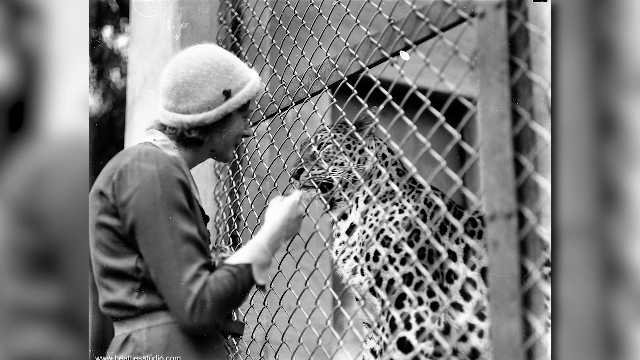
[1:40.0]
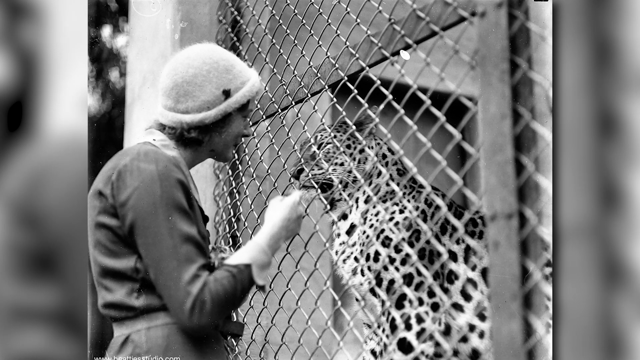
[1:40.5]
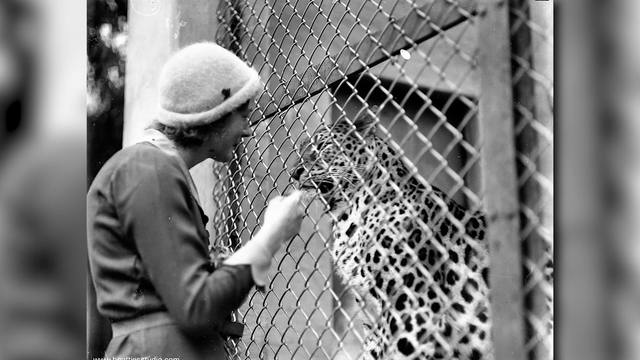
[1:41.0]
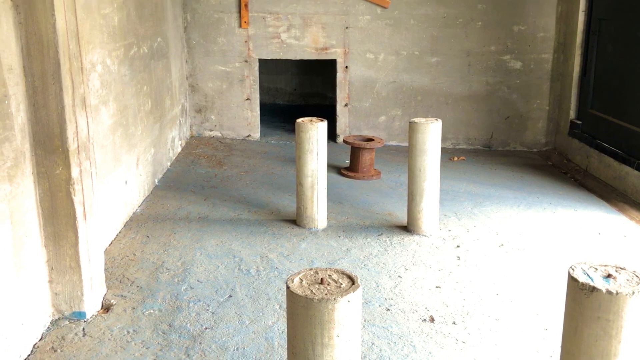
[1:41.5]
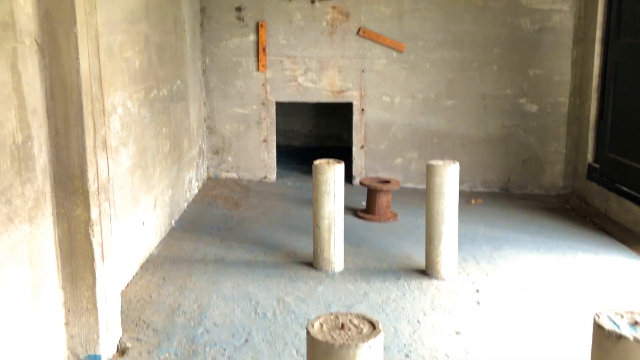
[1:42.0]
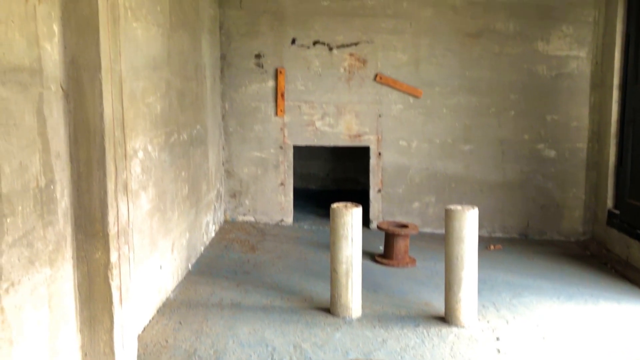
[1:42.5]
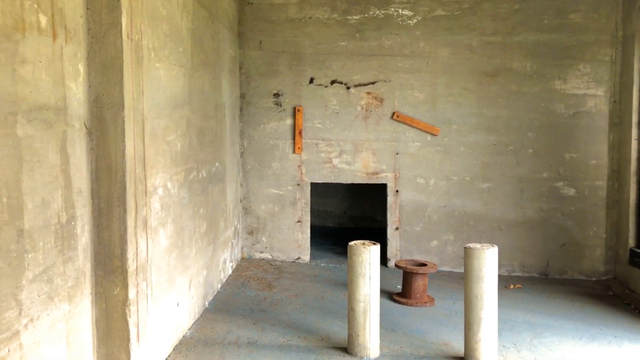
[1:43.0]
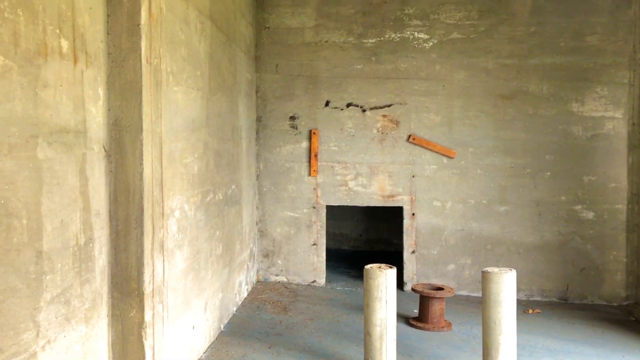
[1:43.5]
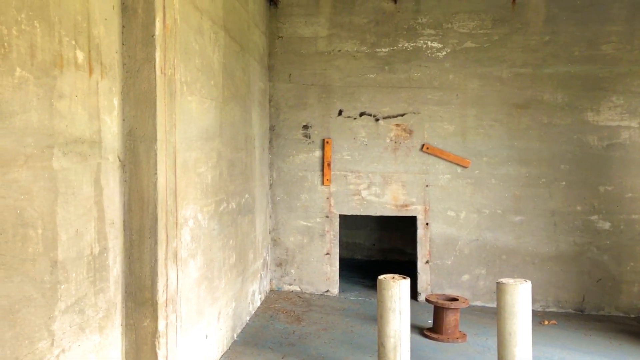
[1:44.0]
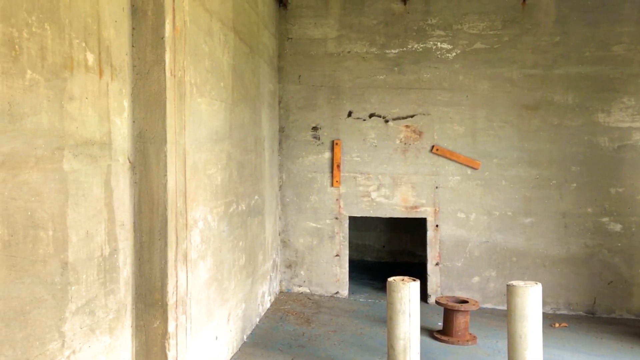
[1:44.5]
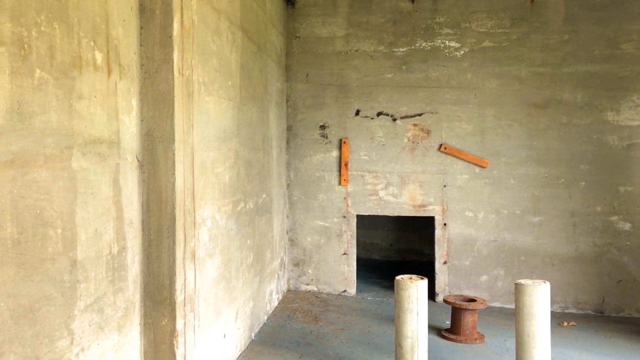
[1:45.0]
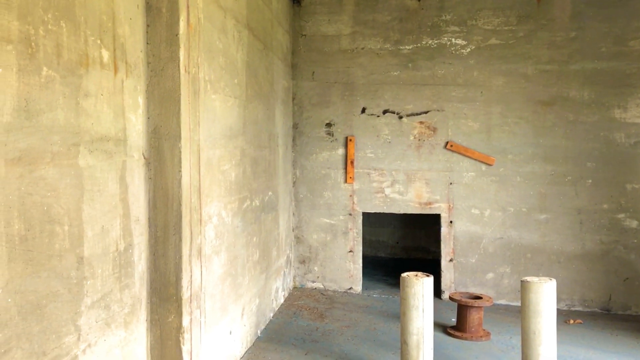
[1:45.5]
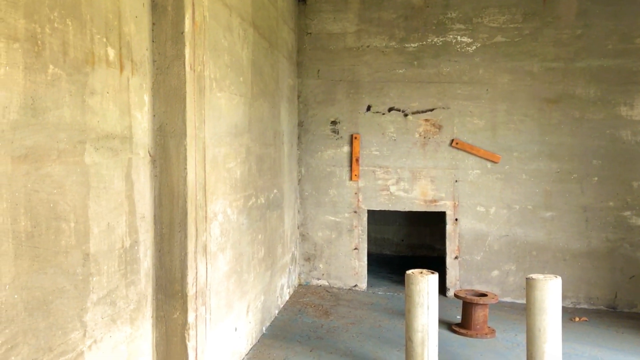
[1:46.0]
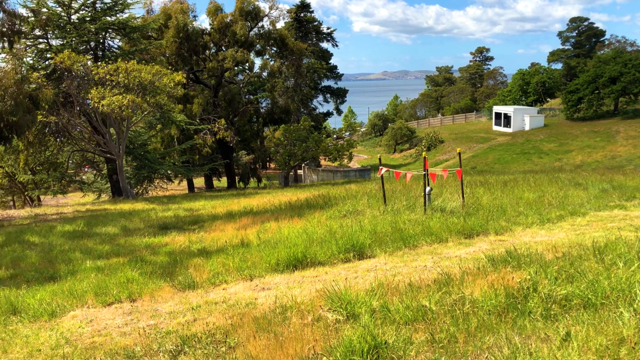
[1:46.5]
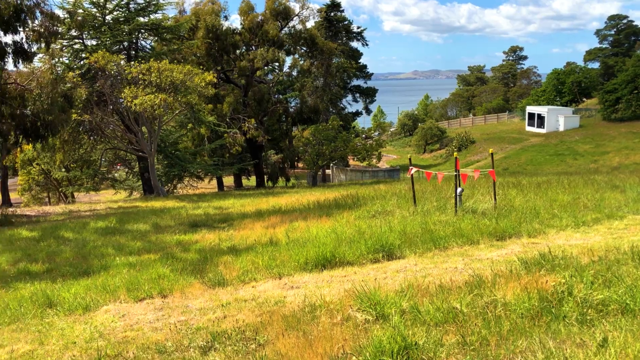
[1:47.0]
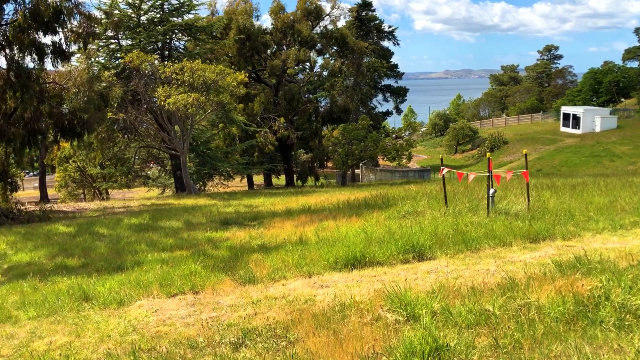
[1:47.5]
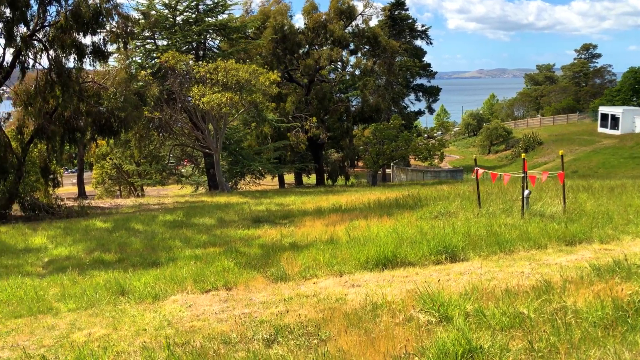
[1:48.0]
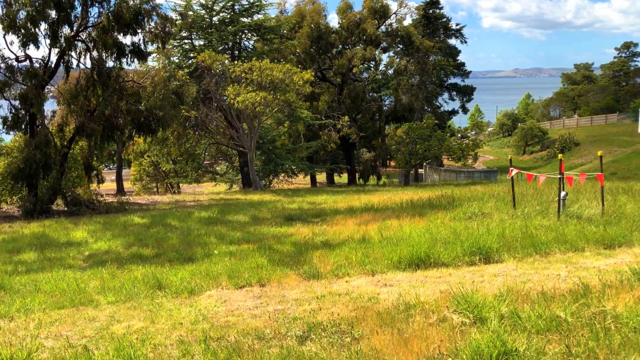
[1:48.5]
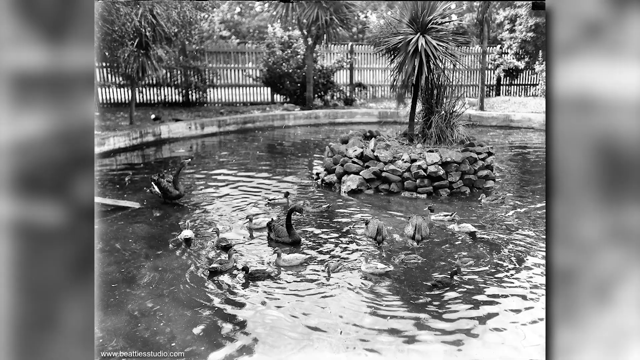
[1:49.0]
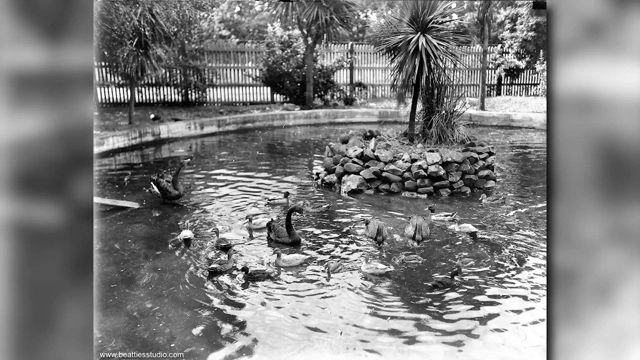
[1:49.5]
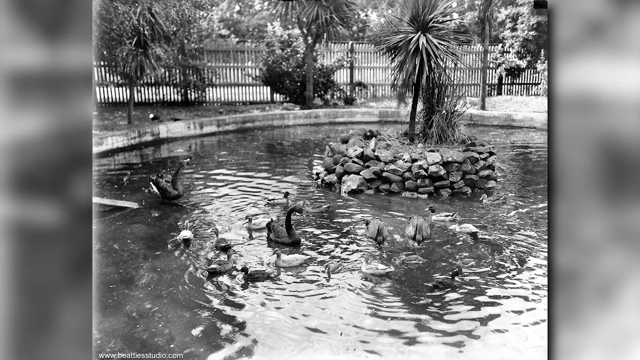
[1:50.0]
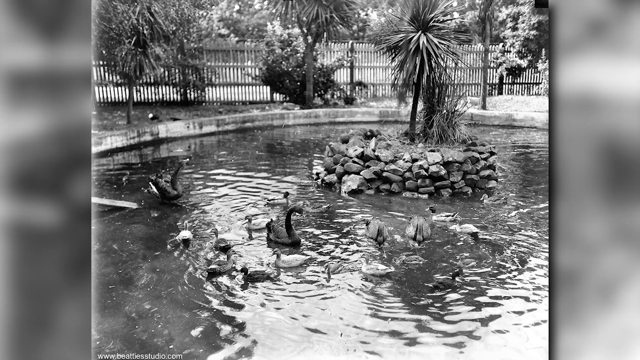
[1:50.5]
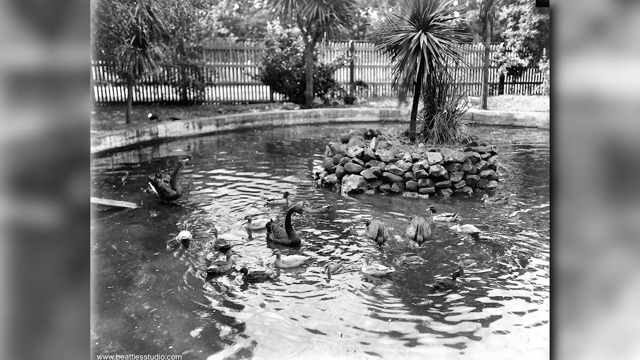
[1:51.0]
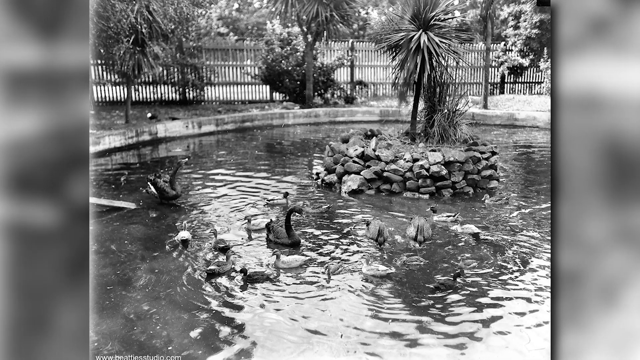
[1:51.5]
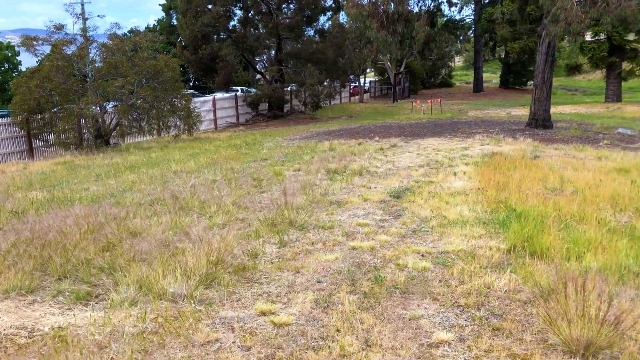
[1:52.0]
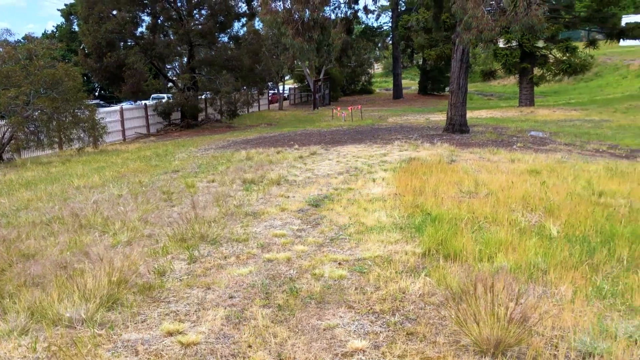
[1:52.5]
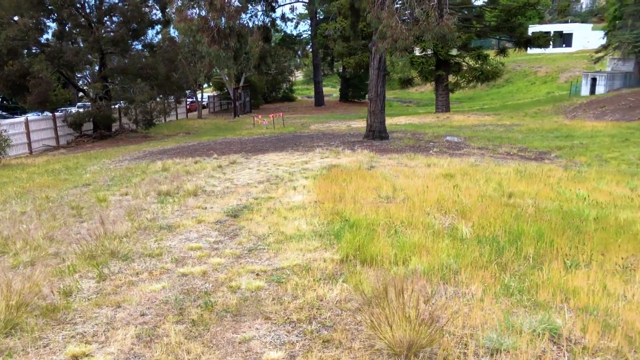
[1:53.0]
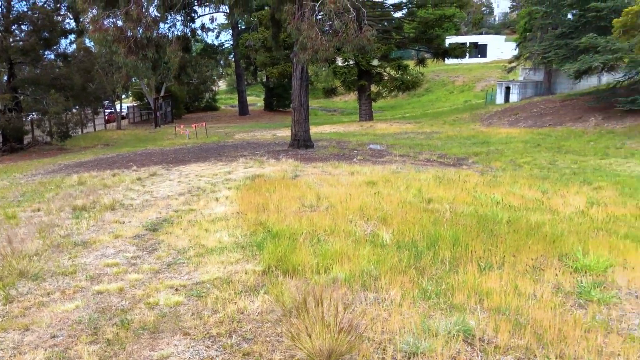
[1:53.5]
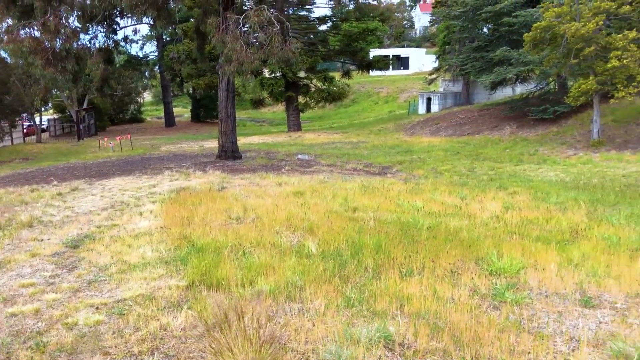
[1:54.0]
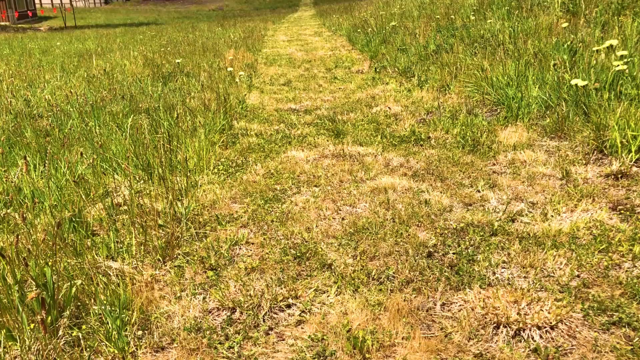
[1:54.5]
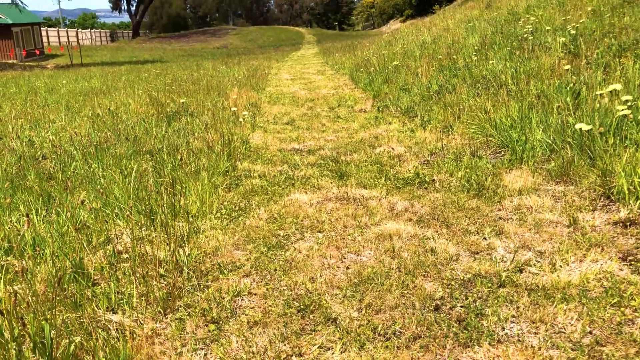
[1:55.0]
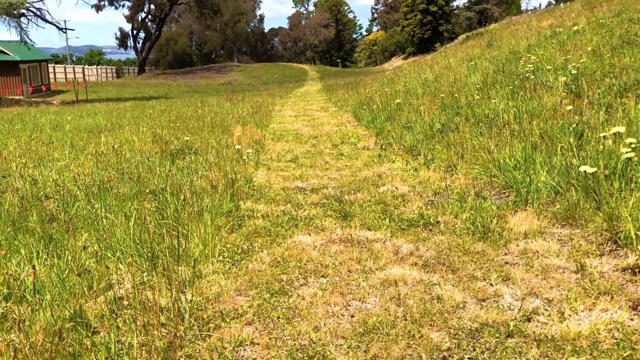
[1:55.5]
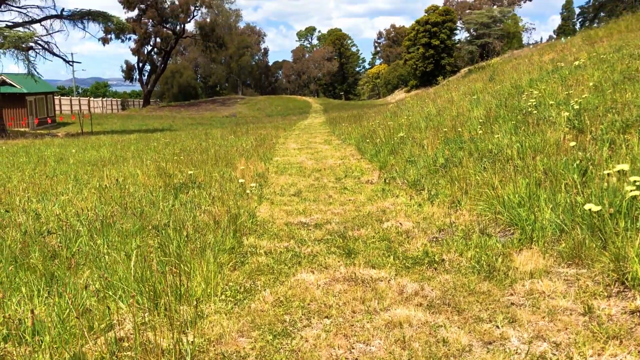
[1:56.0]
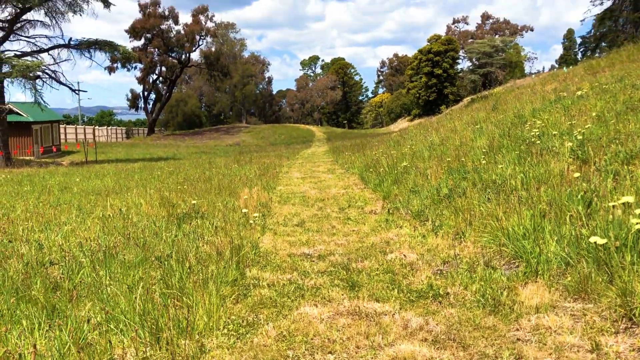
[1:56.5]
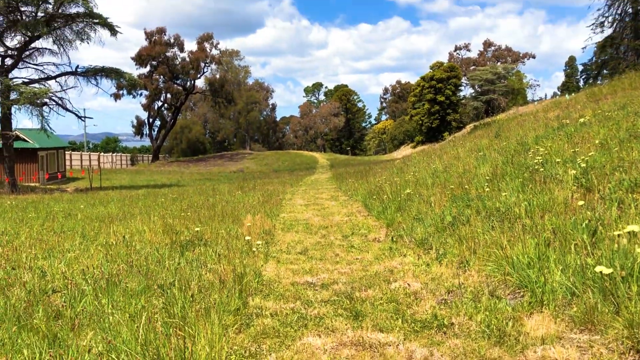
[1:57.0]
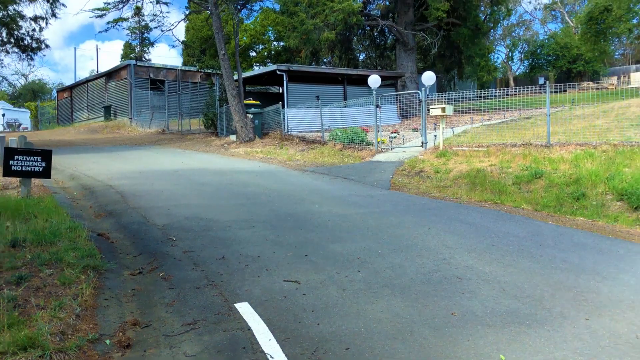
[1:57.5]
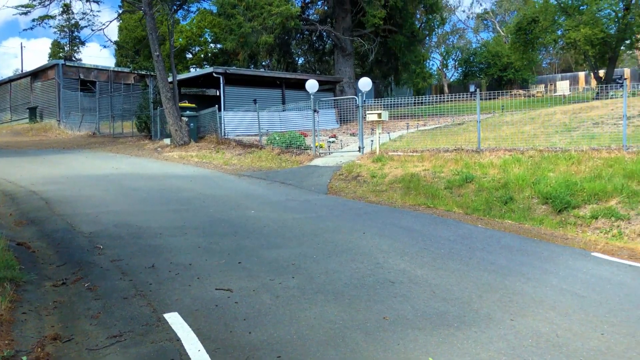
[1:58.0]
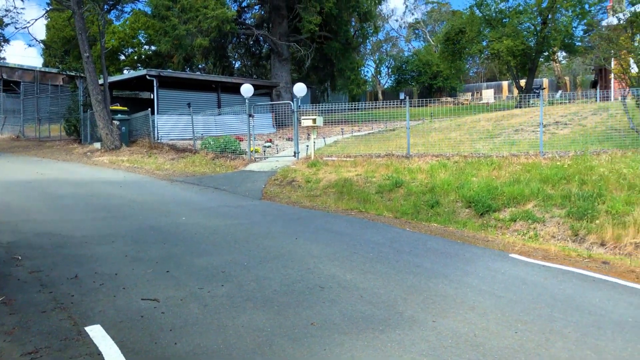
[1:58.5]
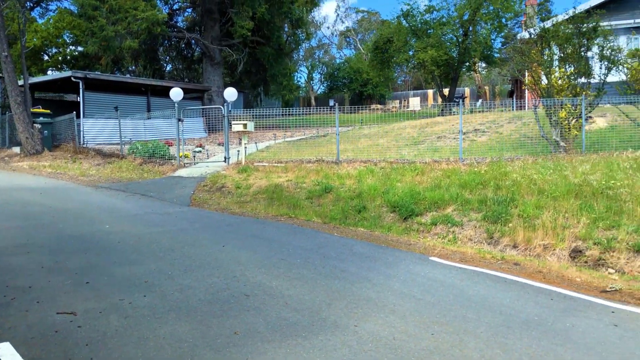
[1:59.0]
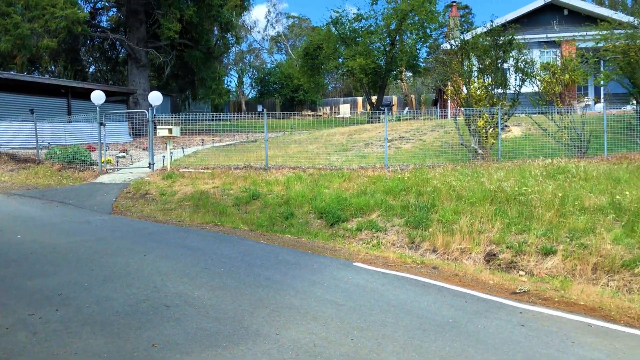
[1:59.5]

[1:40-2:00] The woman feeds the animal, and then the scene changes to the inside of what looks like some sort of abandoned building. The walls are light gray and look like they are made of concrete, and the floor is also concrete. At the bottom of the wall in front, there is a small square opening. The camera looks upward and to the left. The scene changes to a big grass field with a lot of trees in the distance, then to a black and white photo of a pond with ducks. It looks like someone is feeding them, as they are looking downward, and many ducks are poking their beaks into the water. Next is a grass field where the grass at the bottom looks very dry and pale, white in color. The camera moves to the right across a very large park area, and the scene changes to another angle of the park showing a grass trail. Then a road and a fence appear, and as the camera moves to the right, what looks like a house is visible on the other side of the fence.